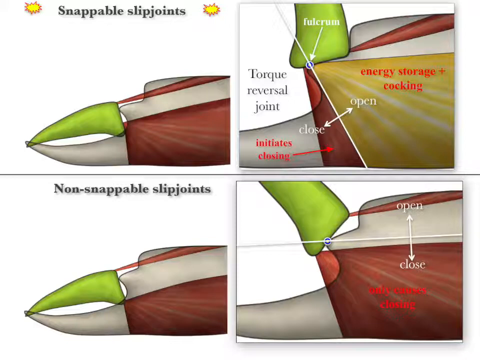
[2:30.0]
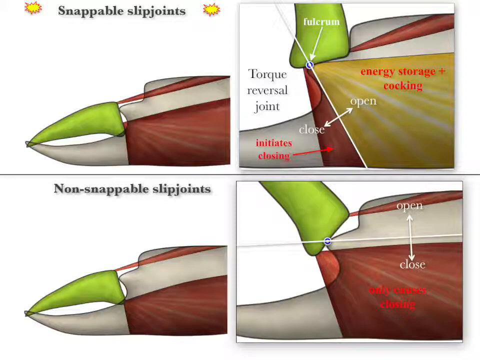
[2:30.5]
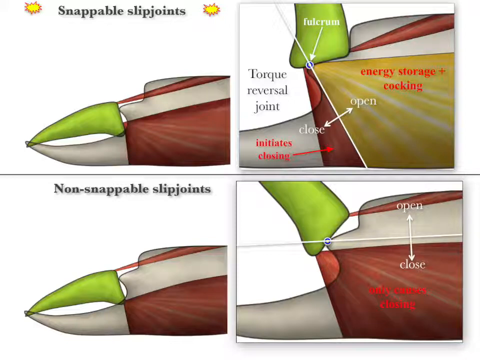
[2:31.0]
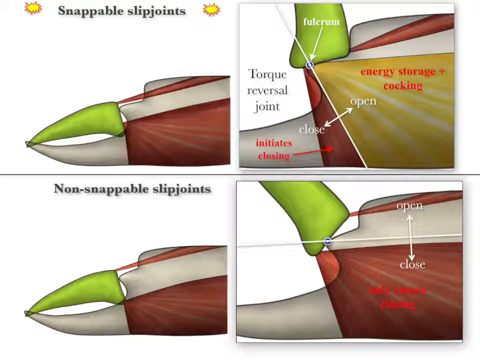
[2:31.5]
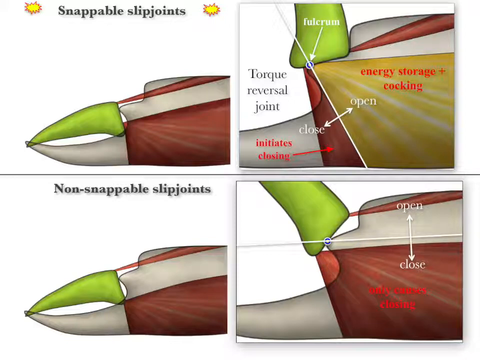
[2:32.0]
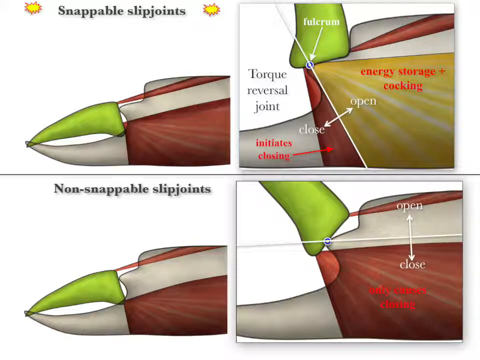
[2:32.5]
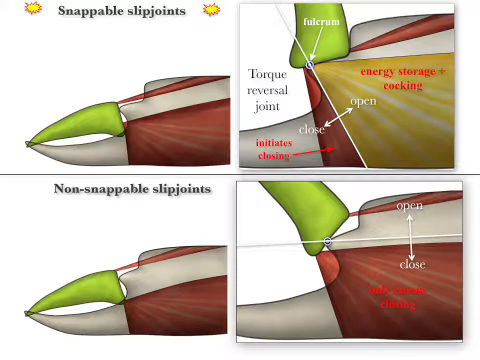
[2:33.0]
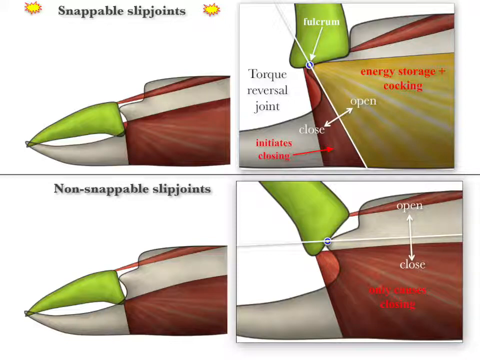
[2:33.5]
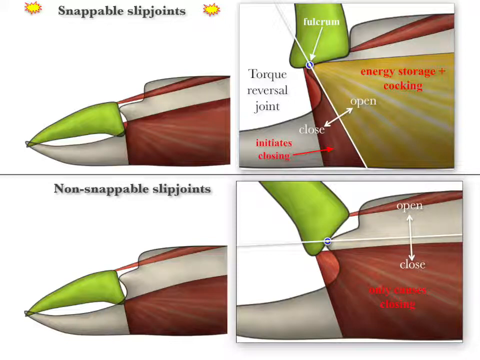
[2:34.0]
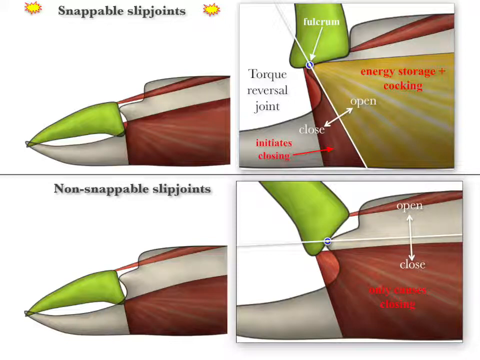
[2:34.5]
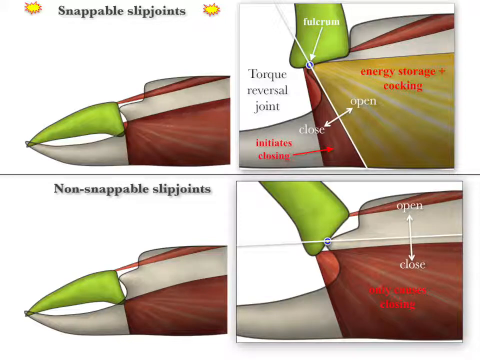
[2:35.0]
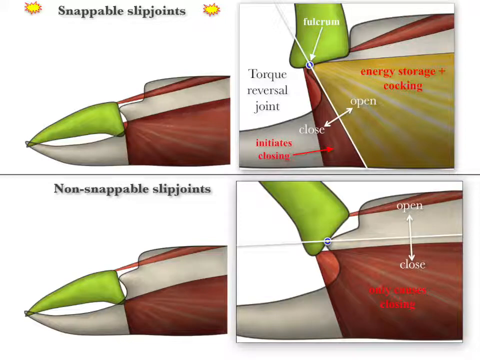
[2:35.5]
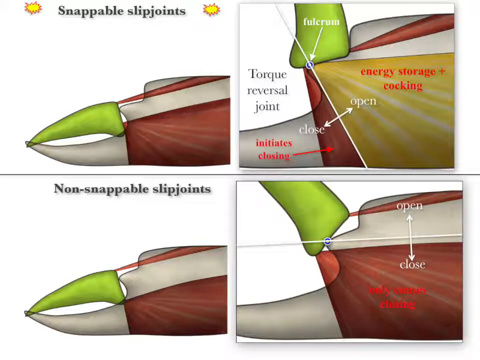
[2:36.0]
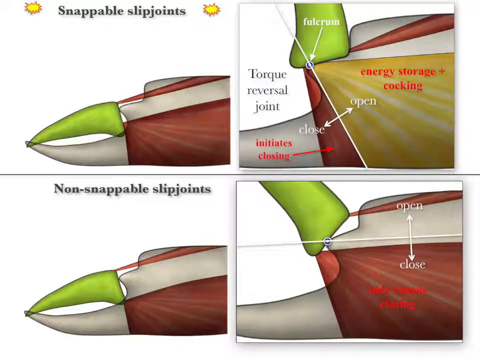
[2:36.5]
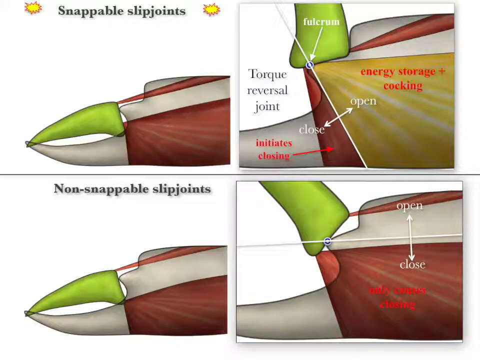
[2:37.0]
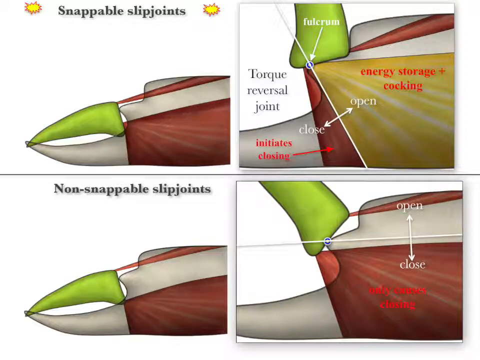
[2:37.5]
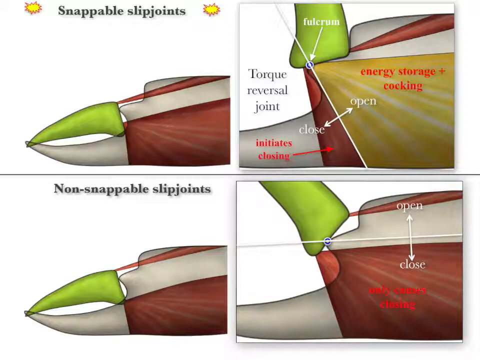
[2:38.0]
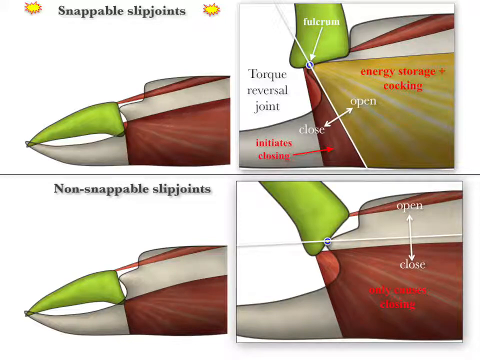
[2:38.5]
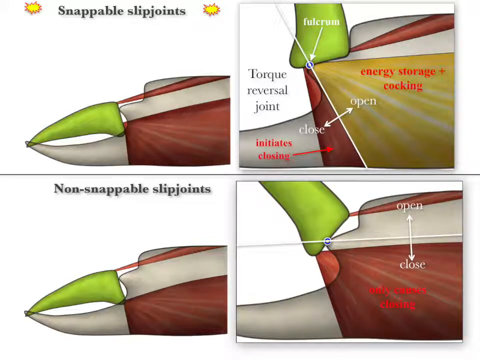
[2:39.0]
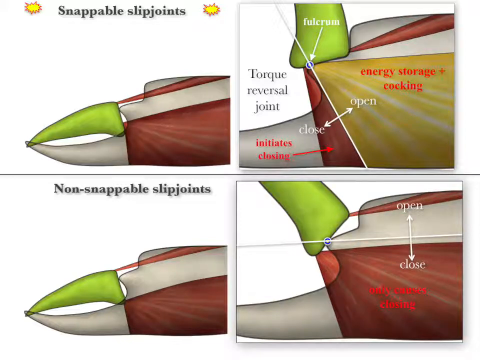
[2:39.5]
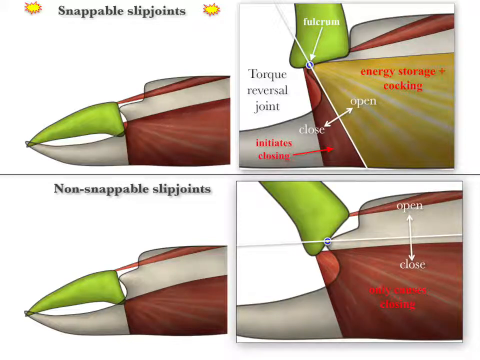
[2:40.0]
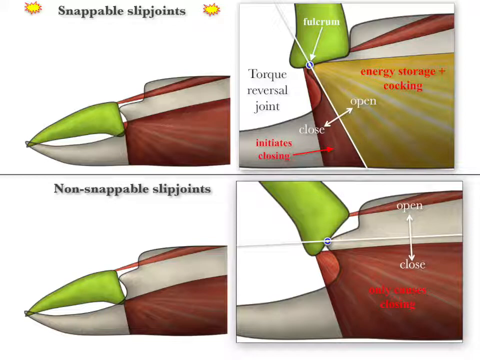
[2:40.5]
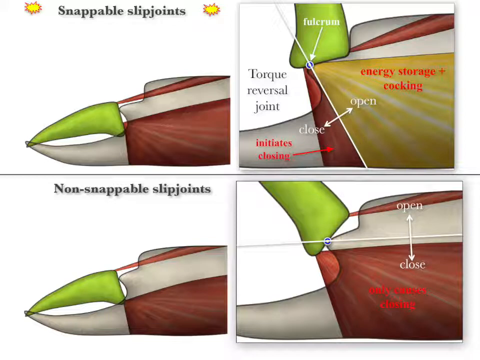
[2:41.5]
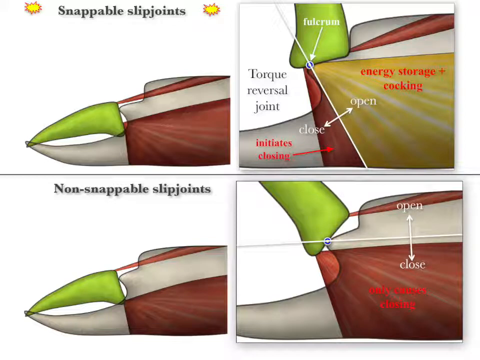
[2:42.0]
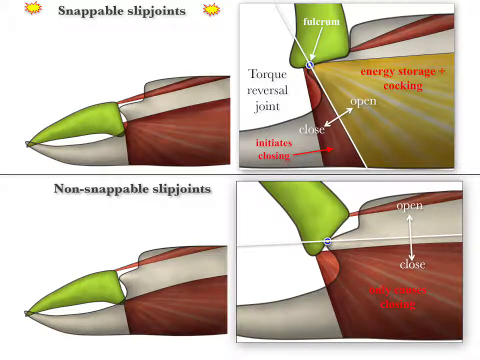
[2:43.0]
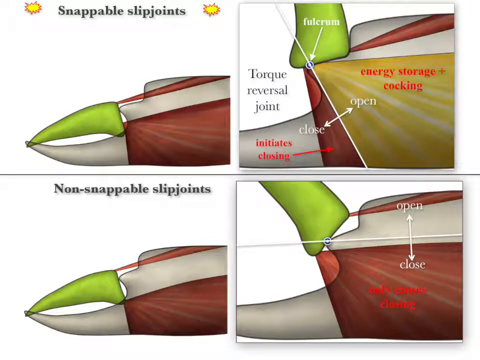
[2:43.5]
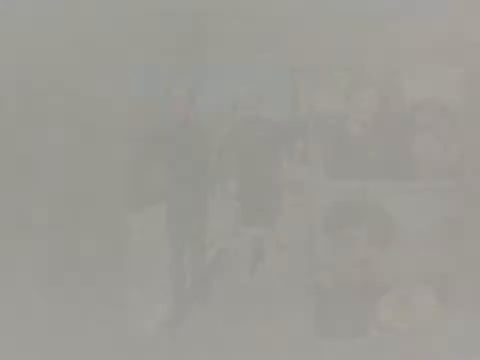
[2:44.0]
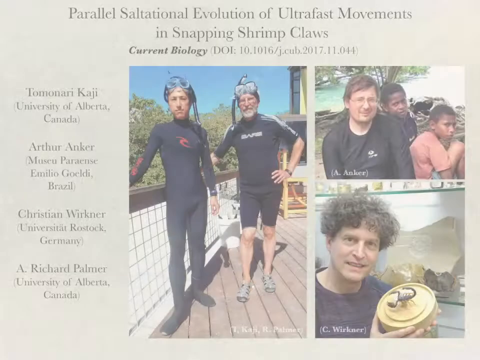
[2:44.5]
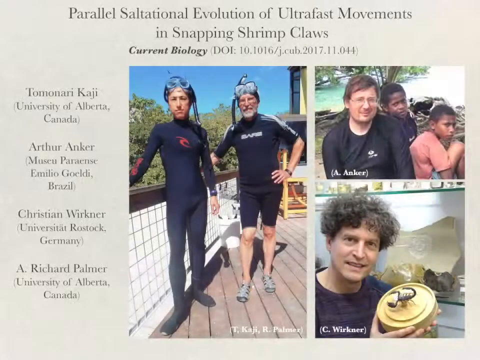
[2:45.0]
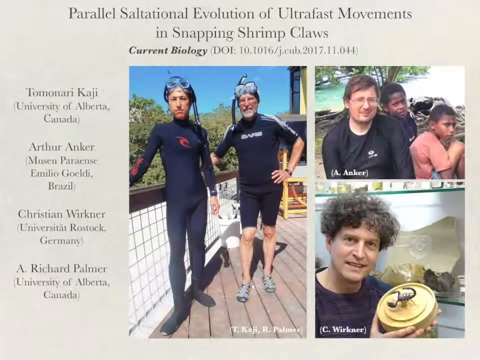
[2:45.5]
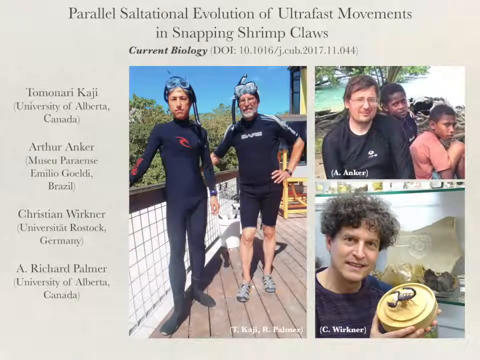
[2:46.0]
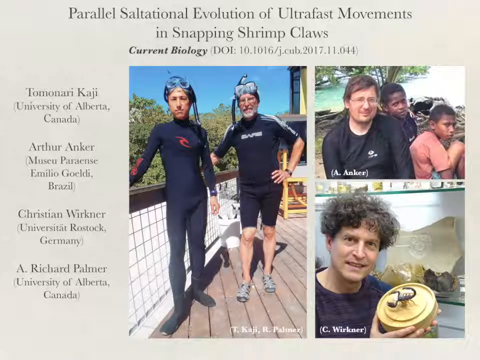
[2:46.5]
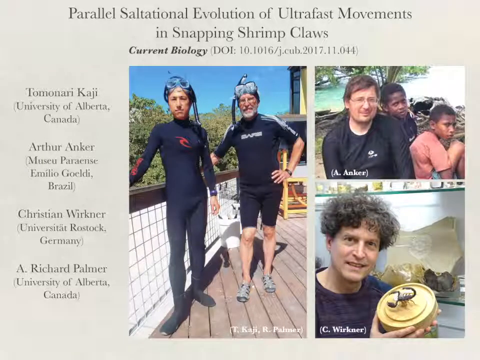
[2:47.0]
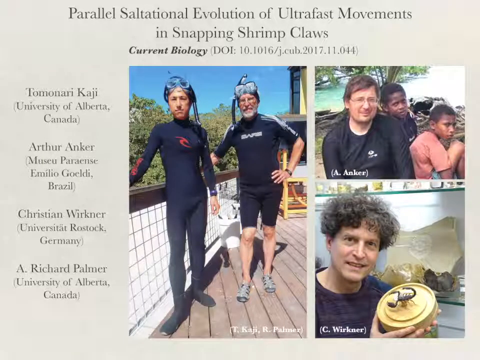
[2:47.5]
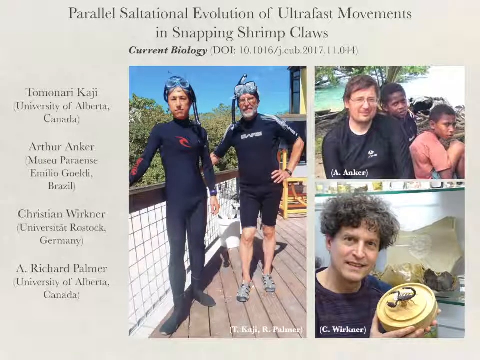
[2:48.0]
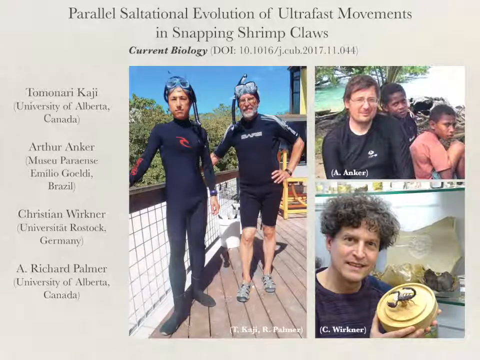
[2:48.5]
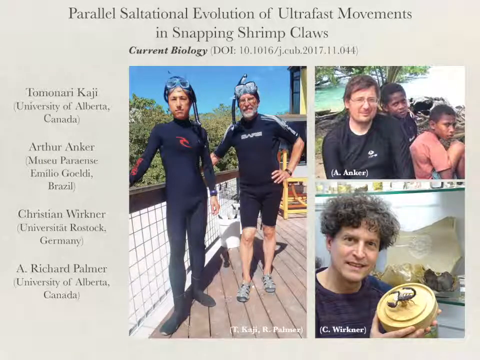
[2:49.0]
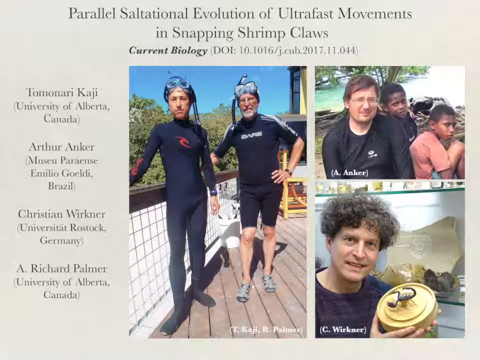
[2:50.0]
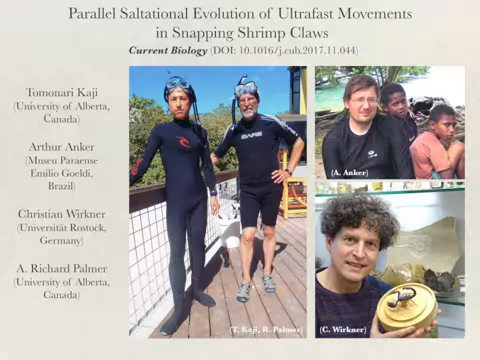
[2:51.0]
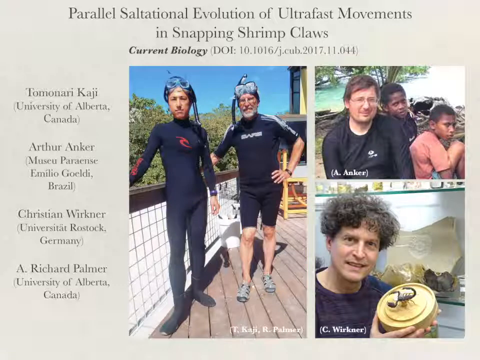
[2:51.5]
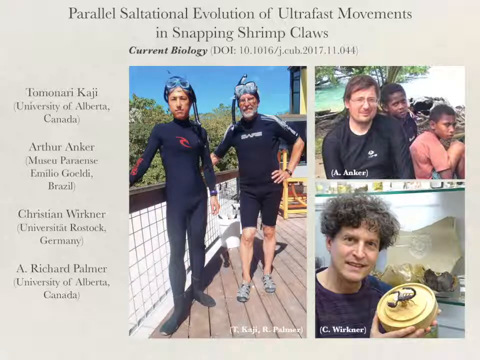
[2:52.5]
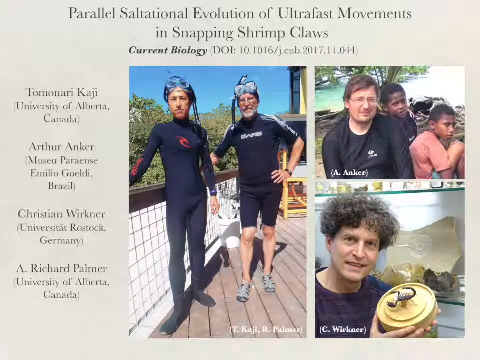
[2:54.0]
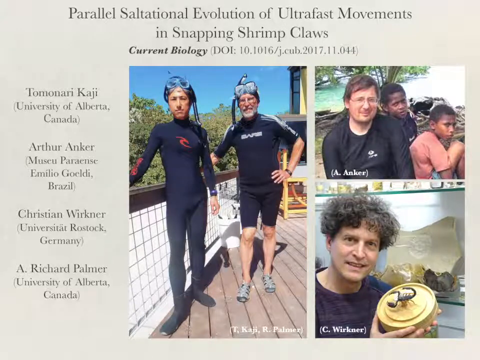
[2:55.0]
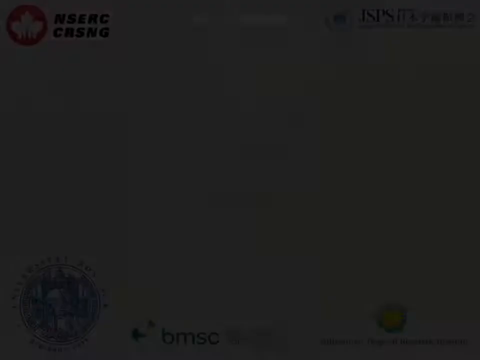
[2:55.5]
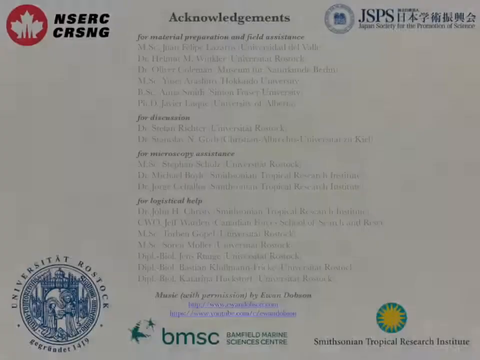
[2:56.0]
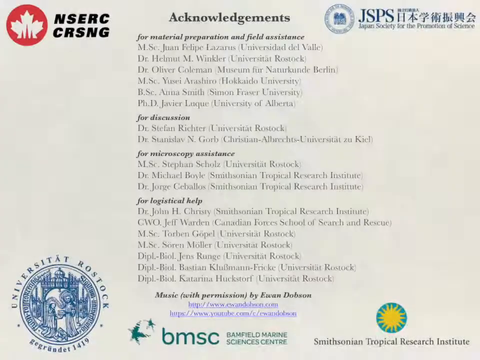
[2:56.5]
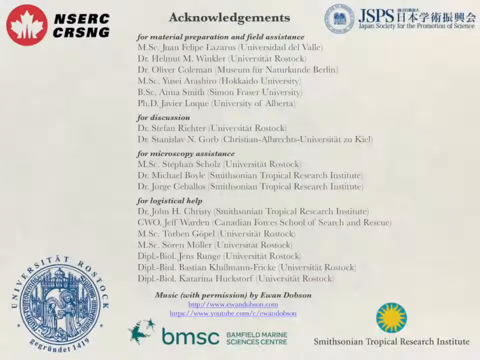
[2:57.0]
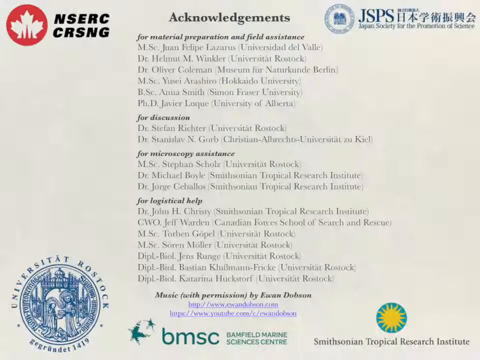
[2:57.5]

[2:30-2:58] The same four separate images are shown: top left, top right, bottom right and bottom left. In the top right, the green part is labeled "fulcrum", the area between the pinchers is labeled "torque reversal joint", the gray pincher is labeled "initiates closing", and the yellow portion reads "energy storage plus cocking". A line comes from in front of the green one, angling down behind the gray one, with an arrow at the bottom labeled "closed" and an arrow above labeled "open". In the one below it, the top pincher is angled a little forward and a line goes straight across, with "open" on top and "close" on the bottom and an arrow pointing to both. The video then switches to an article with a title at the top reading "parallel saltation evolution ultra movements in snapping shrimp claws". It shows the date and who wrote it, and there is information down the left side. In the center are two divers standing on a deck, and three people sitting outside on a rocky edge in front of some water. At the bottom is a man with a little platform bearing a diagram of what looks like a scorpion.